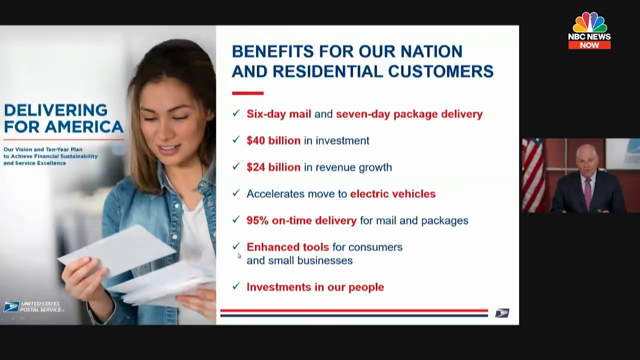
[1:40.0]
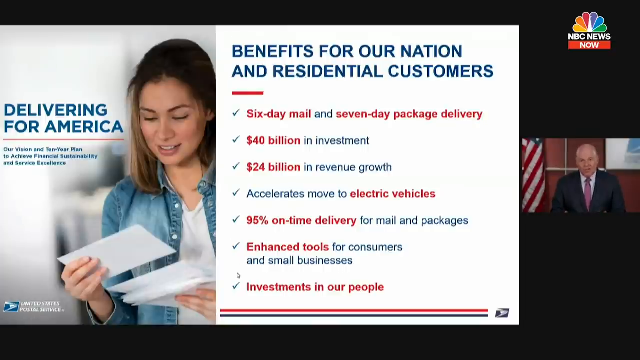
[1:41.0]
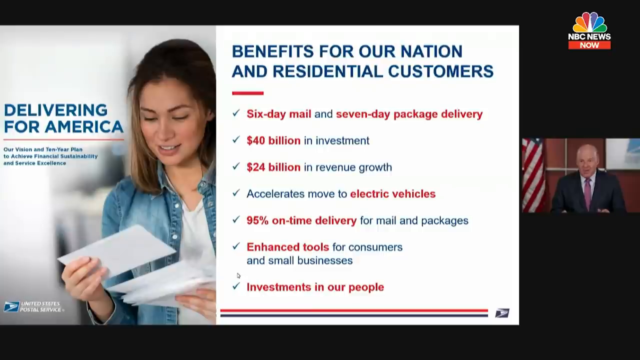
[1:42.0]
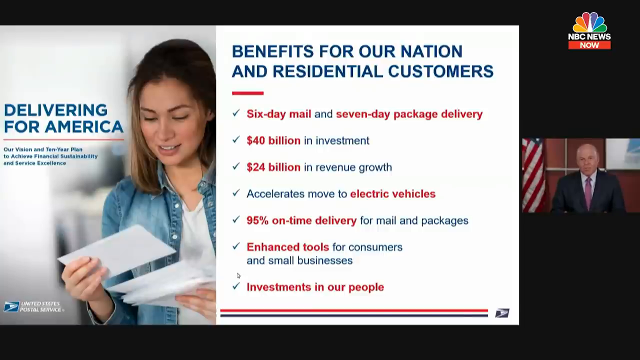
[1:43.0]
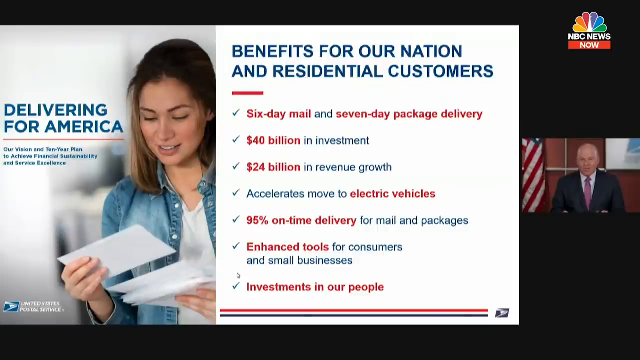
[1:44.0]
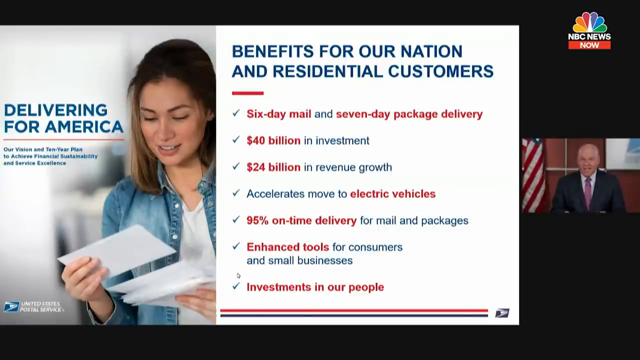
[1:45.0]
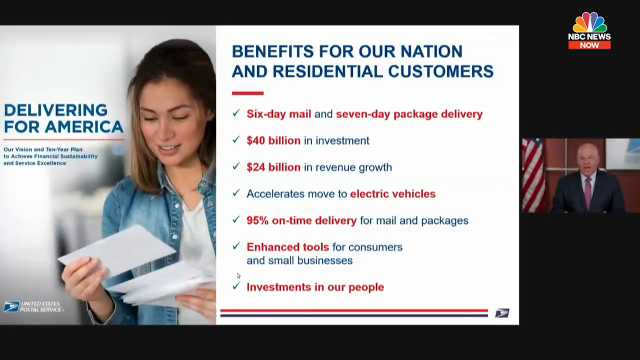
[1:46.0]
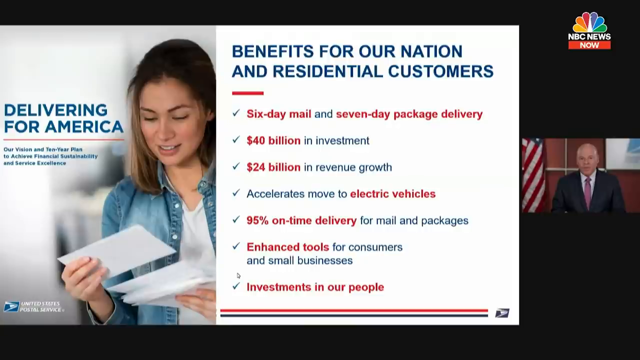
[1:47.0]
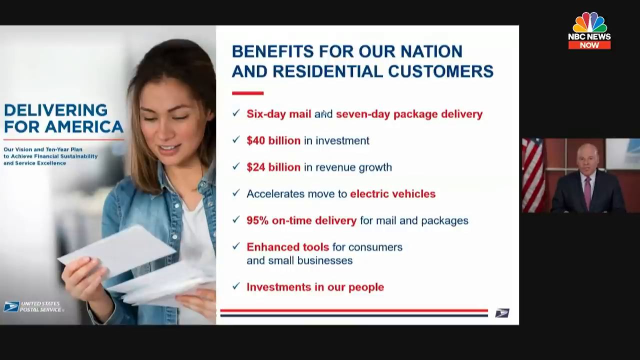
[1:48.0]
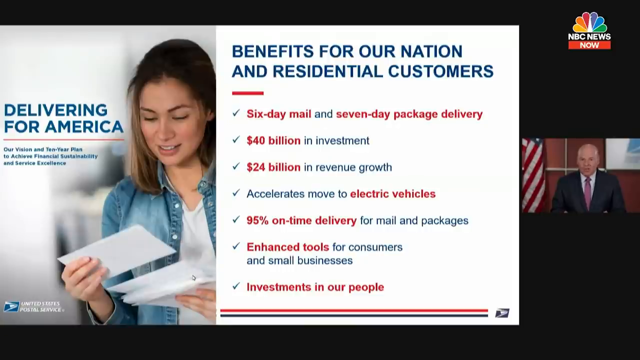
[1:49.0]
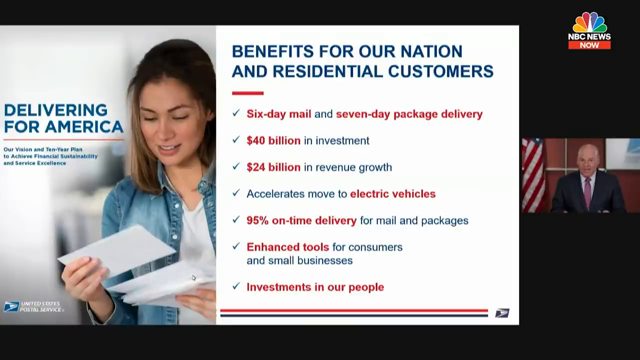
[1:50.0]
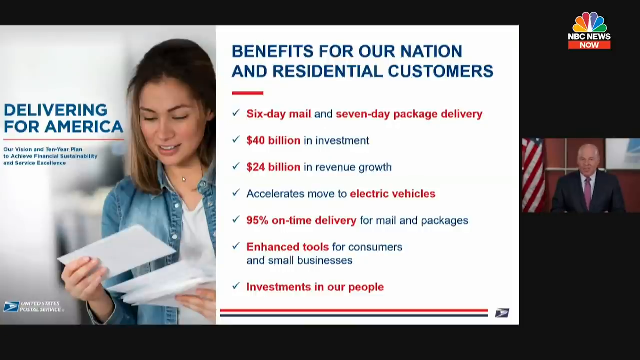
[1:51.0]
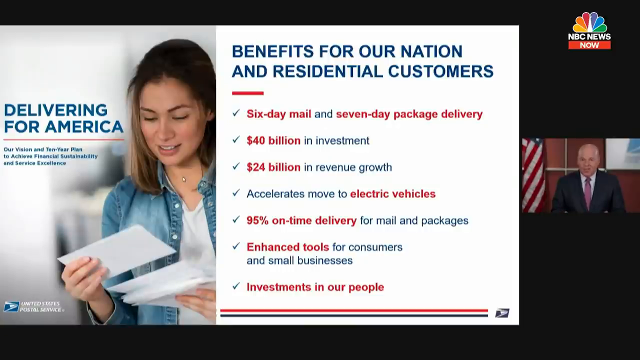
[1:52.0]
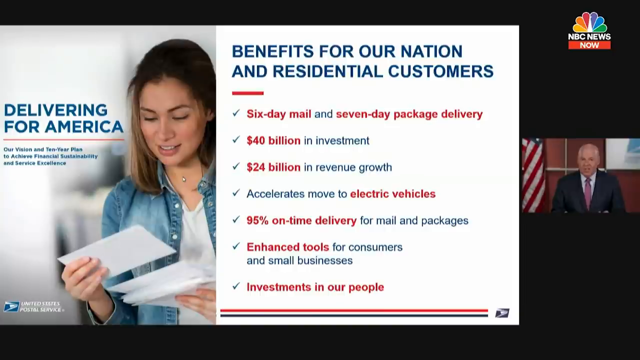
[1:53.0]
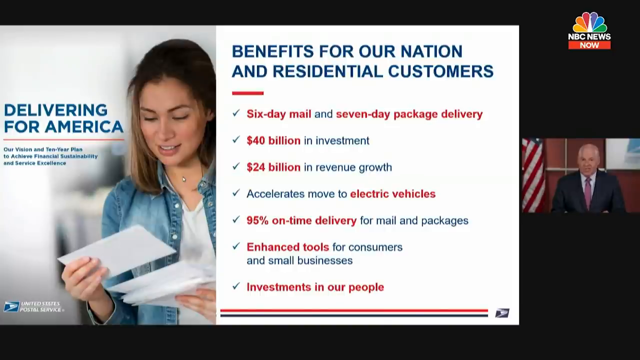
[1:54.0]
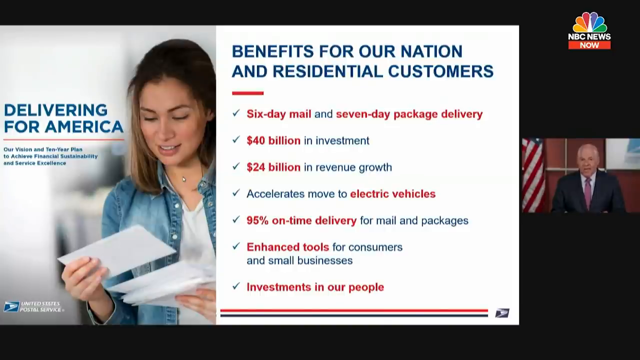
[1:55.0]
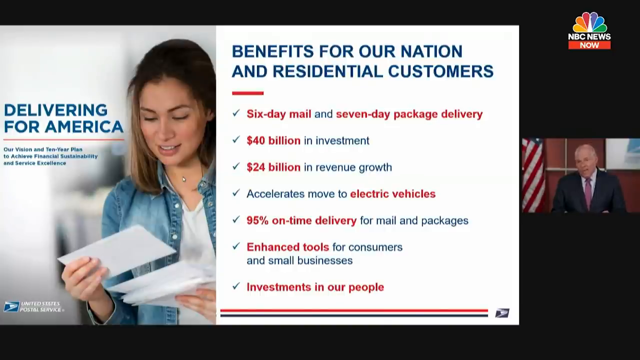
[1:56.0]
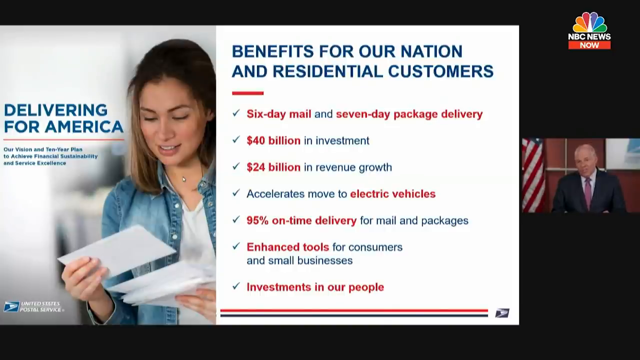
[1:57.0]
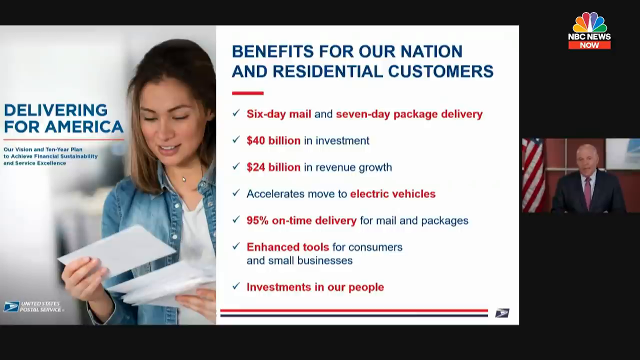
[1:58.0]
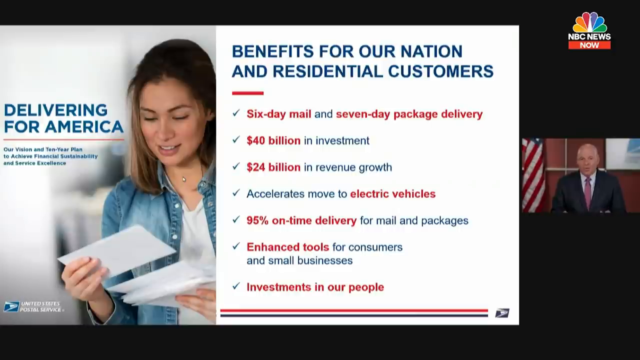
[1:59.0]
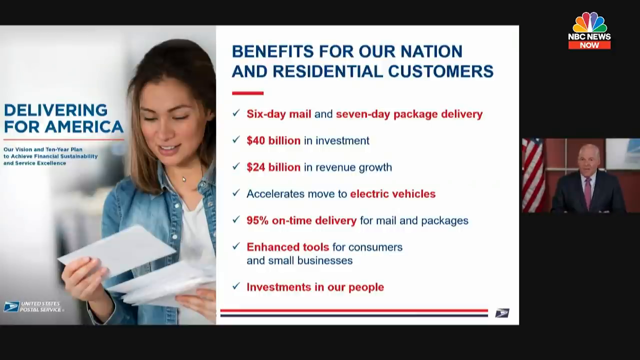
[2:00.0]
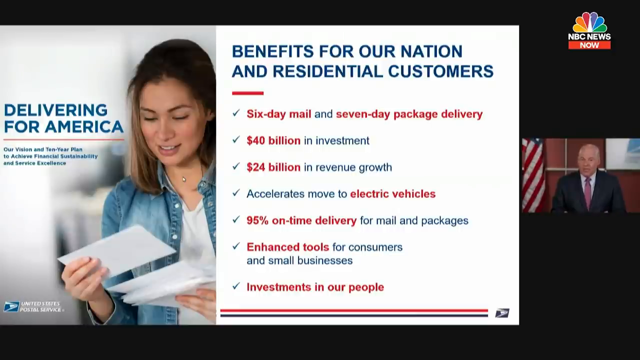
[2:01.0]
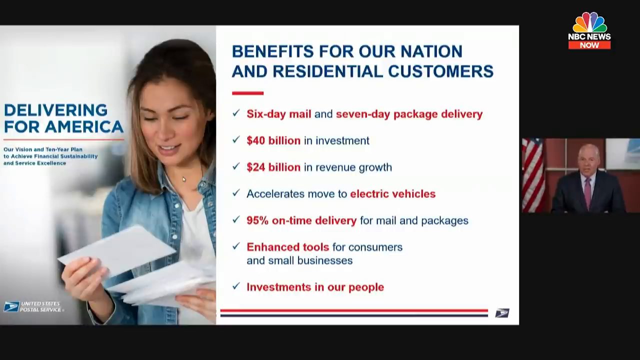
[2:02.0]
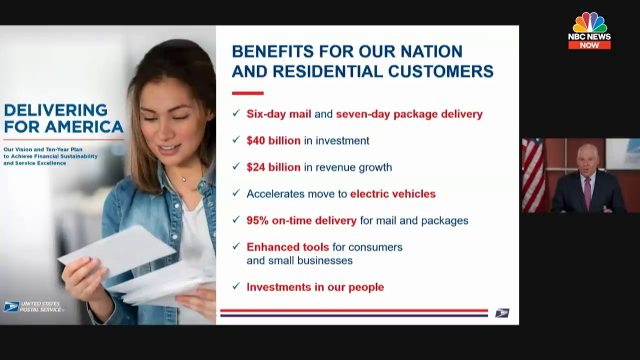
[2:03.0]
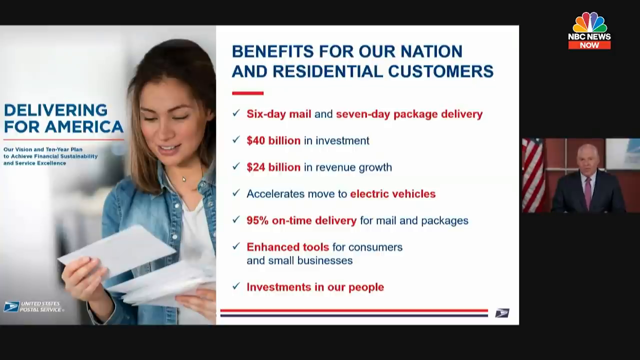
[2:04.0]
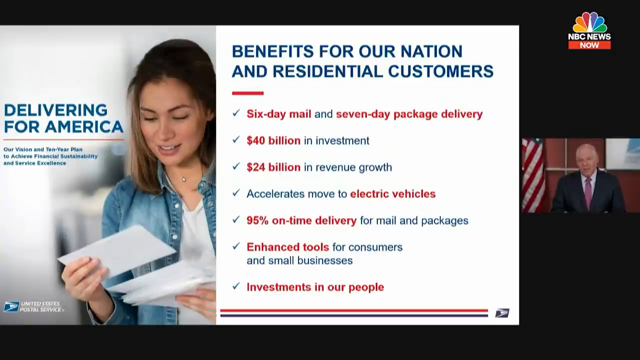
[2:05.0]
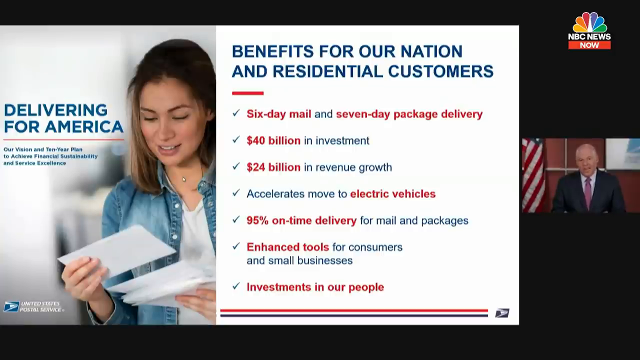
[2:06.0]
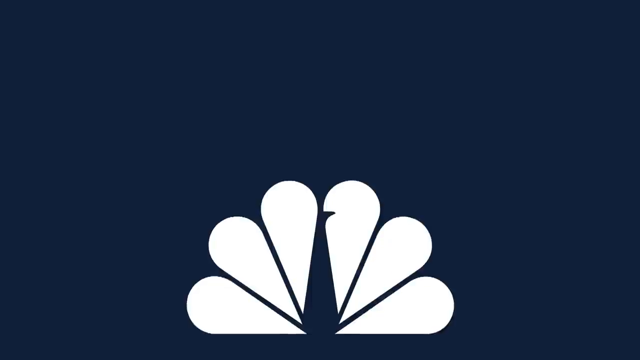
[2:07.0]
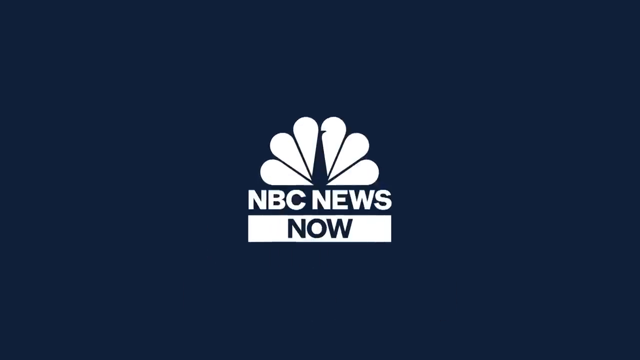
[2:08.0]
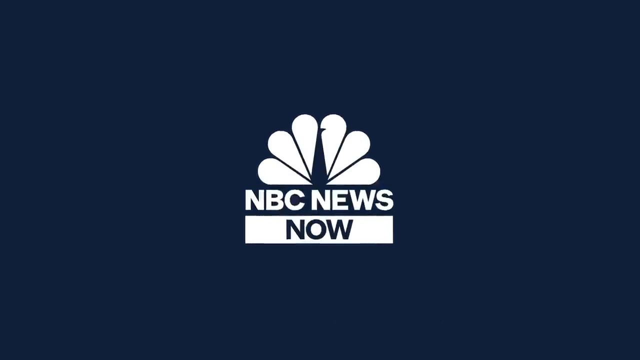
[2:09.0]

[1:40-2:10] A report on the United States Postal Service shows a slideshow on the left side, while on the right side a bald man wearing a black suit with a pink tie talks directly to the camera. The NBC News Now logo is overlaid on the top right. The leftmost side of the slide shows a woman looking at an envelope. Next to her, text reads "Delivering for America, our vision and 10-year plan to achieve financial sustainability and service excellence," with the United States Postal Service logo on the bottom left. On the right side of the image, text reads "Benefits for our nation and residential customers," followed below by "6-day mail and 7-day package delivery," "$40 billion in investment," "$24 billion in revenue growth," "accelerates move to electric vehicles," "95% on-time delivery for mail and packages," "enhanced tools for consumers and small businesses," and "investments in our people."